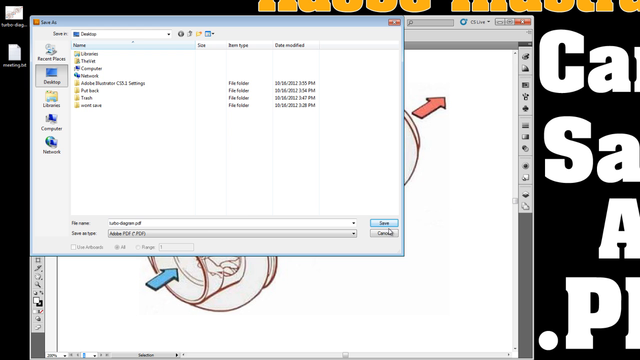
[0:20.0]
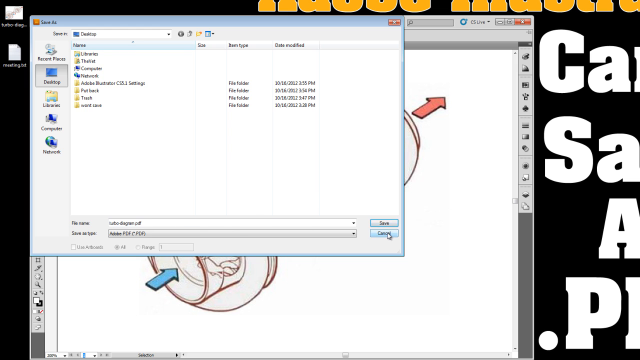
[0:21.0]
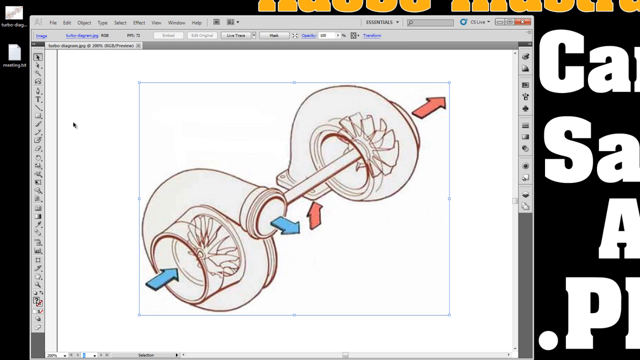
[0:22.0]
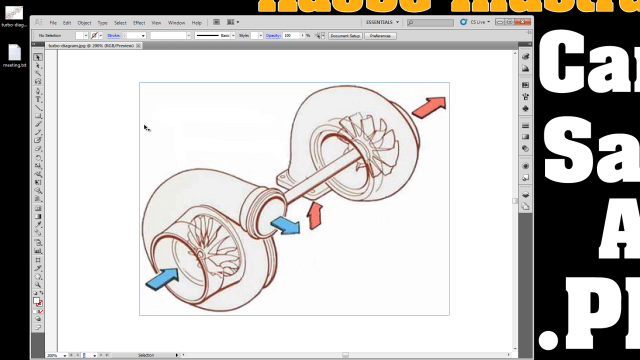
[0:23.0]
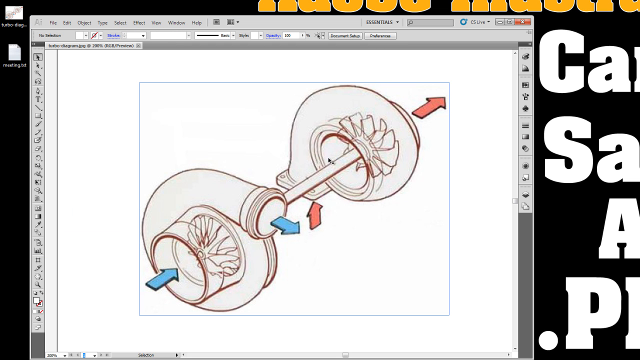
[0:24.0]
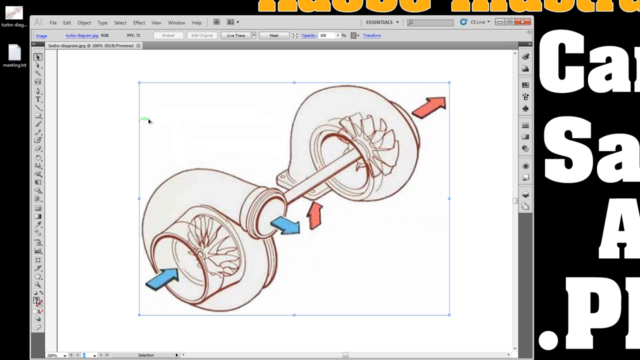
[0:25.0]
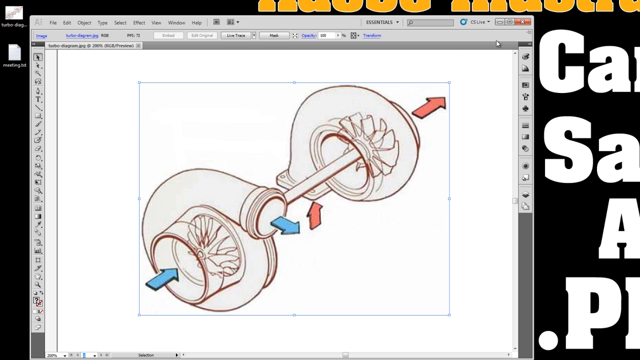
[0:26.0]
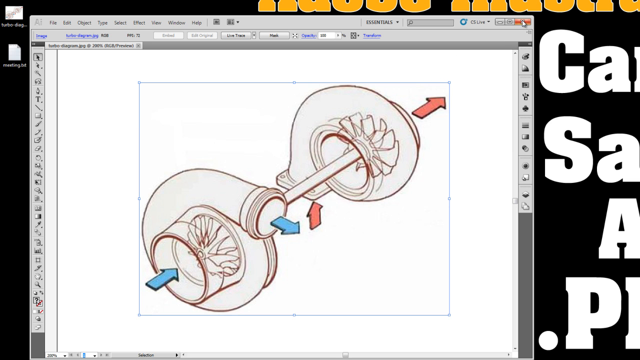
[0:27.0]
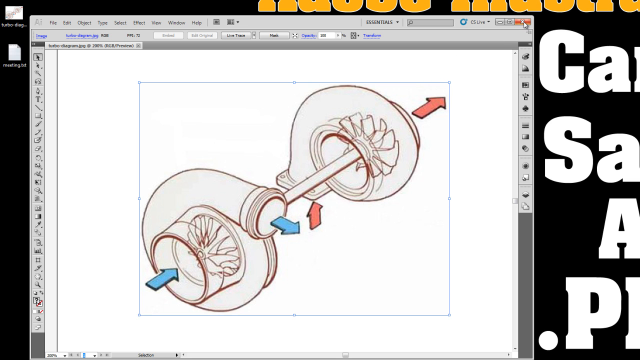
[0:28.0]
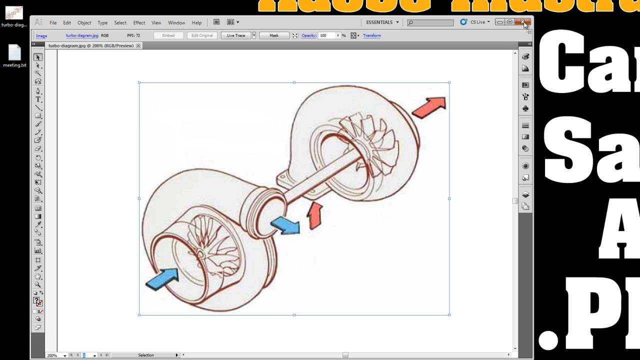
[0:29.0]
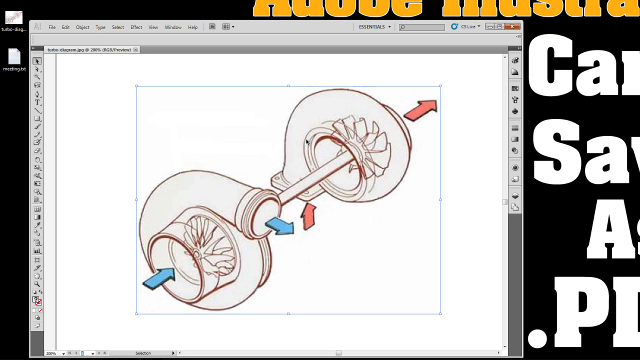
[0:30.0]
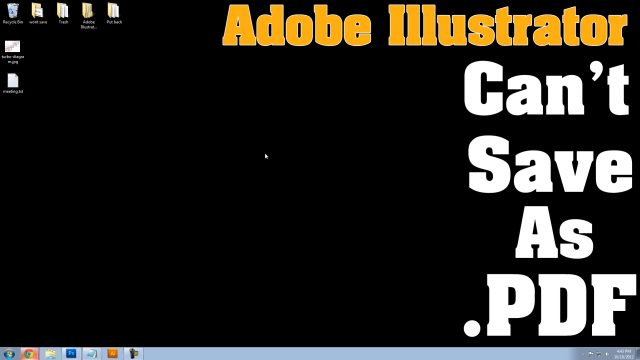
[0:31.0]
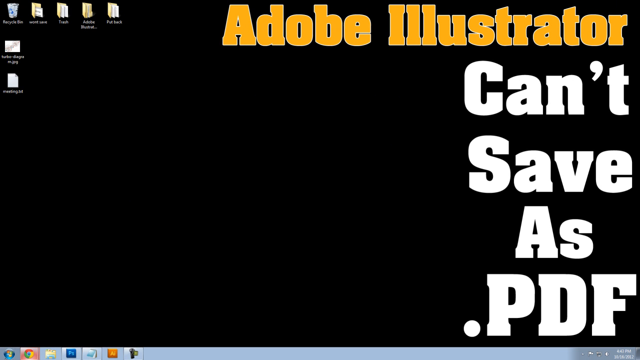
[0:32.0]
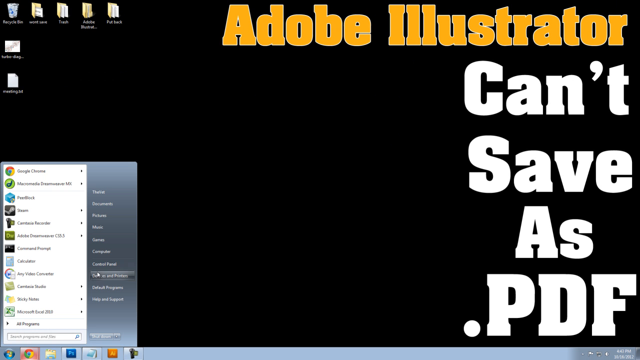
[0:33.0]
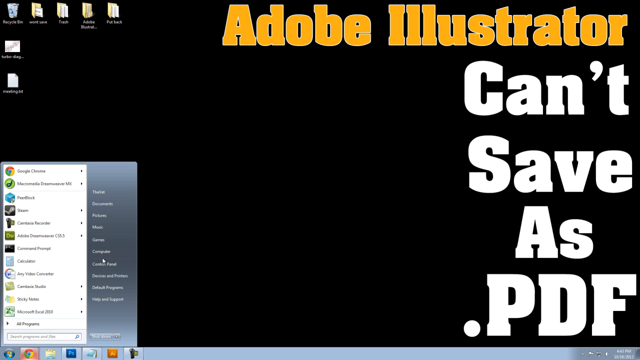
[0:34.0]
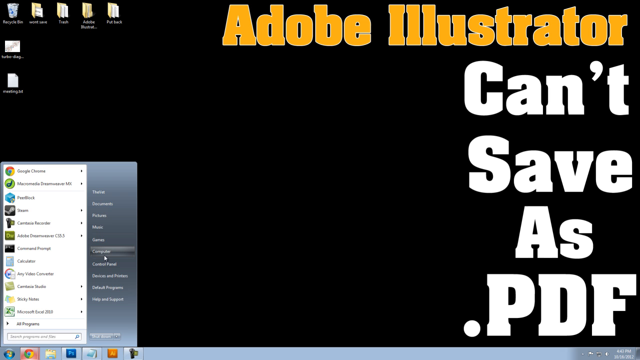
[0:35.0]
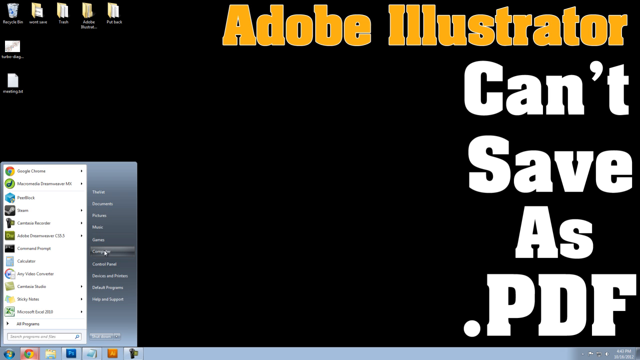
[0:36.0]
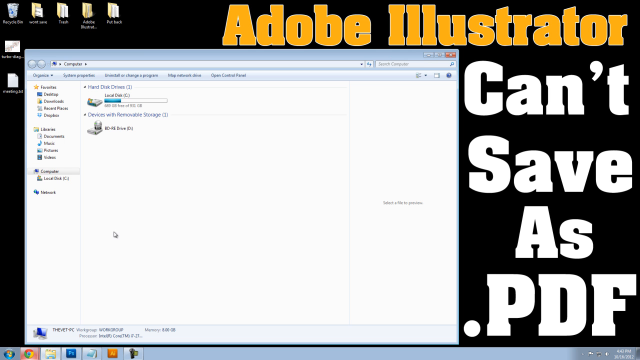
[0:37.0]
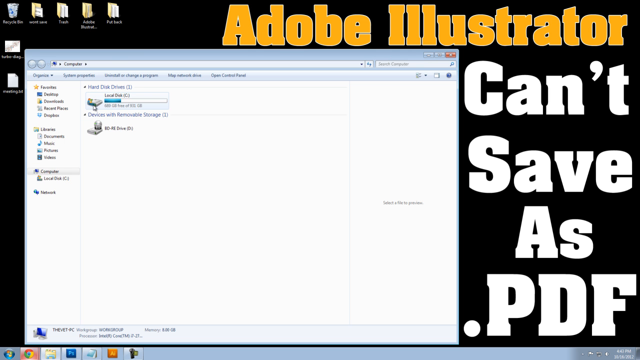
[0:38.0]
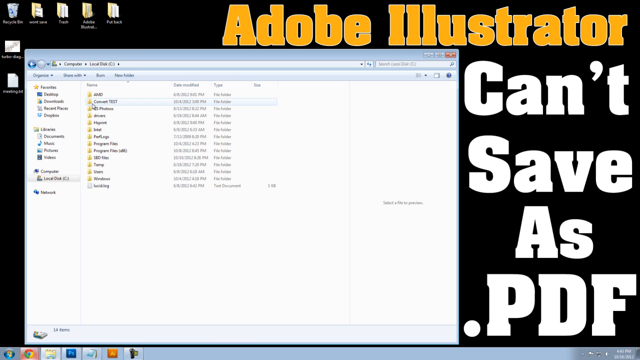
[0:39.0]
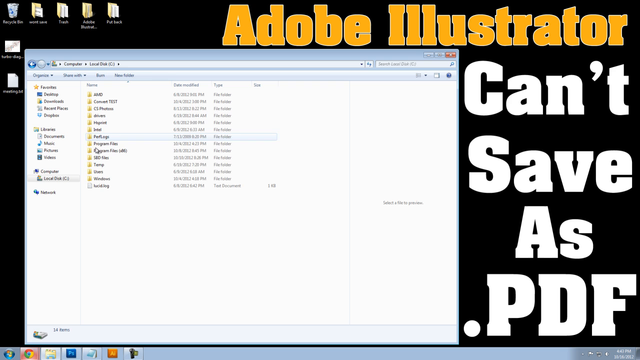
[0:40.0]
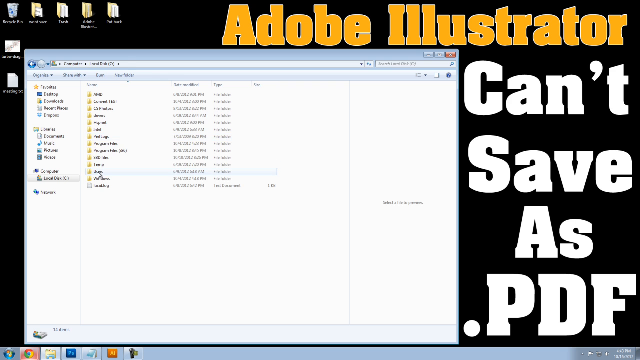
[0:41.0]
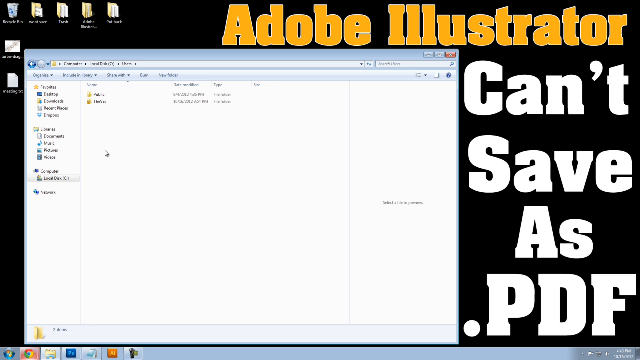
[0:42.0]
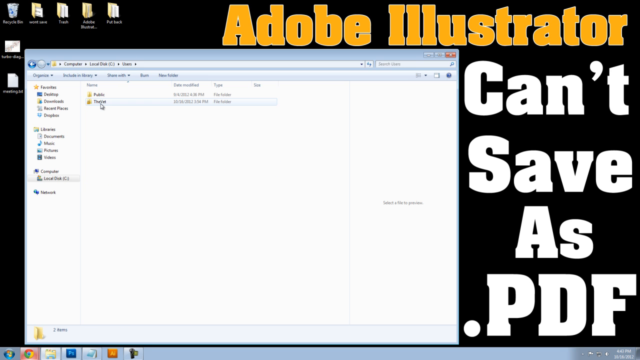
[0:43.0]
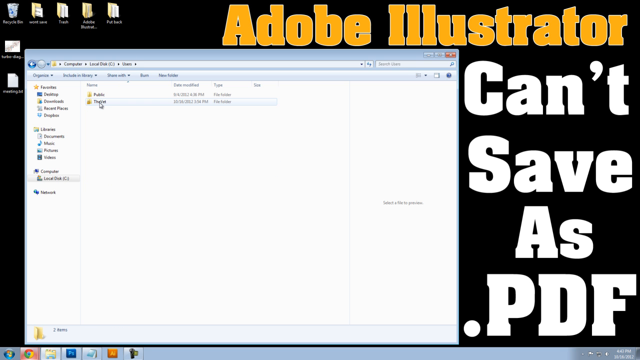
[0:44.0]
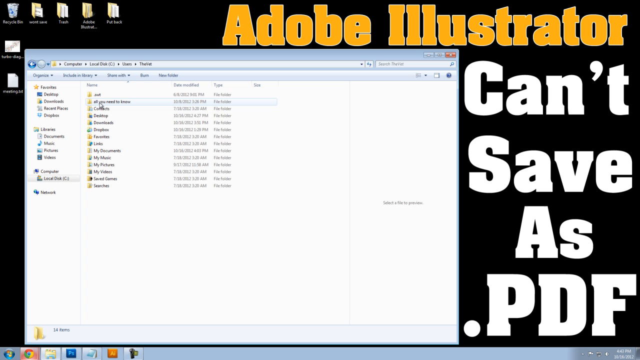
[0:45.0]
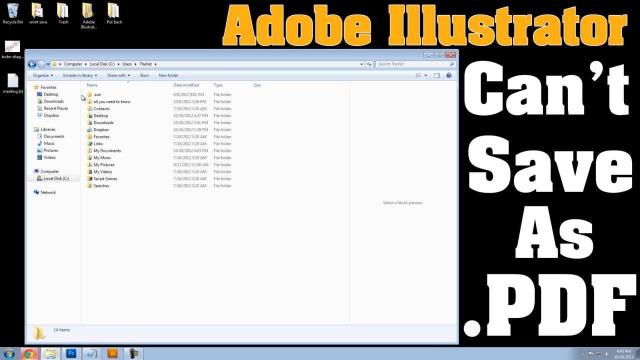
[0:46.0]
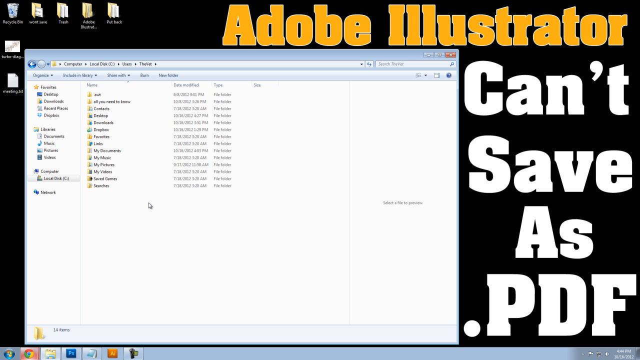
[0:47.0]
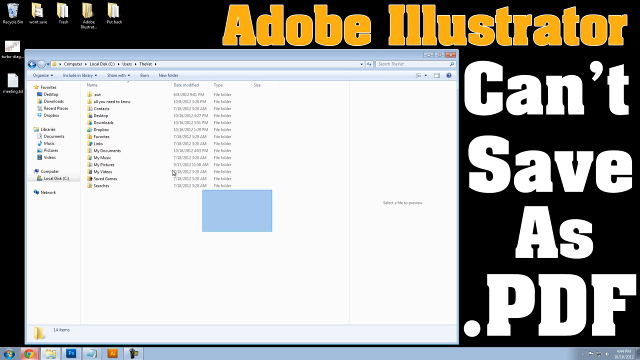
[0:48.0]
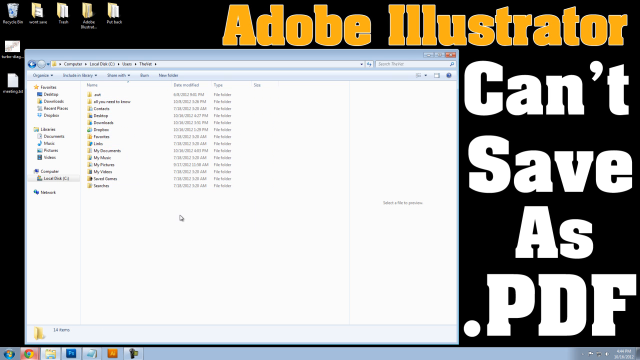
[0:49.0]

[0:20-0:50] What looks like a save or export window appears in the program being used, apparently Adobe Illustrator, seemingly for exporting the diagram as a PDF. The view returns to the diagram of the fan or turbine, with the mouse still moving around the screen. The pointer goes to the close icon in the top right-hand corner, and the window closes and disappears. The user then opens the Windows start menu and selects another option to look at the hard drive, clicks into a sub-directory, goes through folders inside it, navigating a long way down a file tree, and selects a whole lot of files at once.